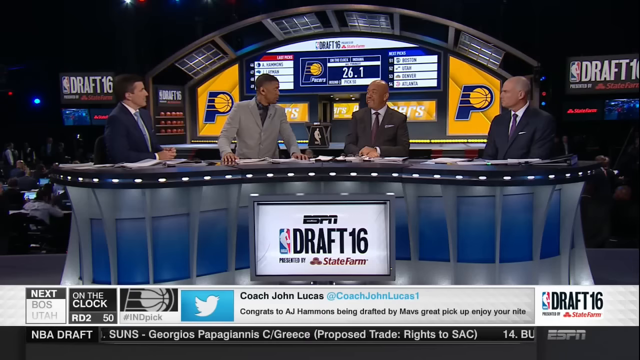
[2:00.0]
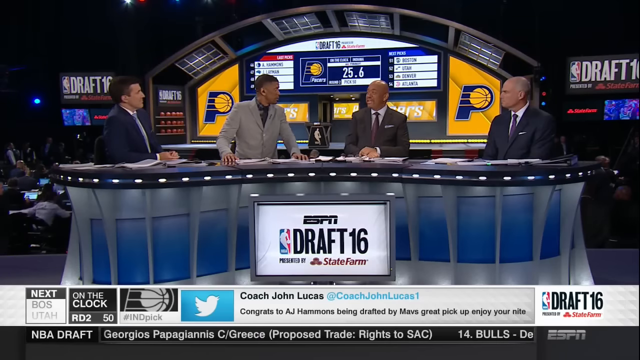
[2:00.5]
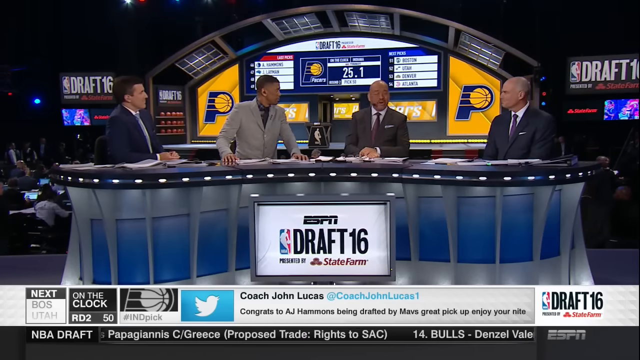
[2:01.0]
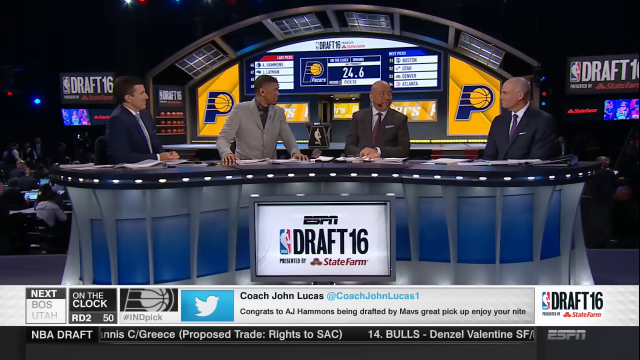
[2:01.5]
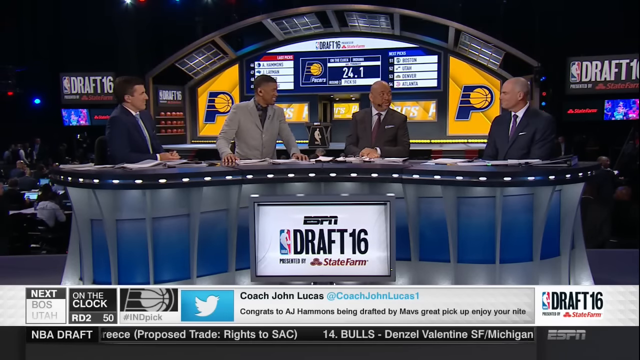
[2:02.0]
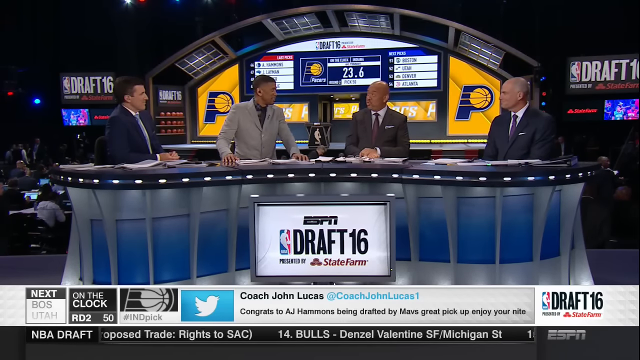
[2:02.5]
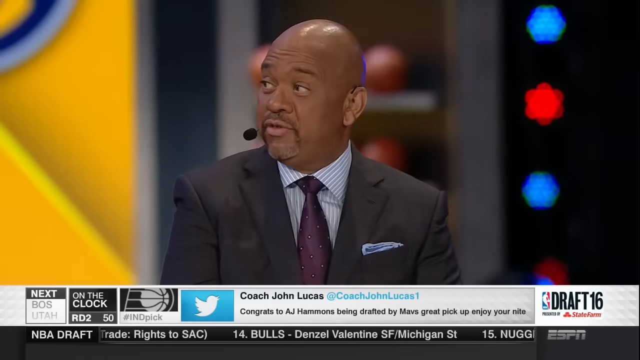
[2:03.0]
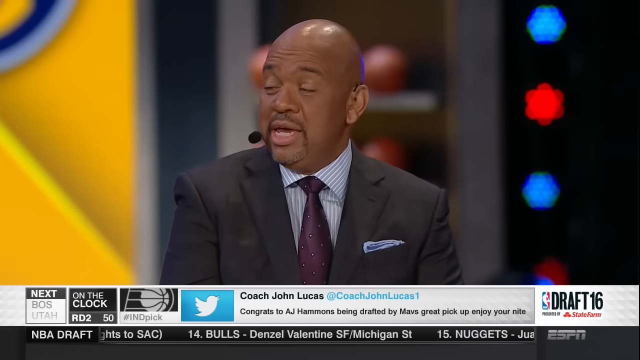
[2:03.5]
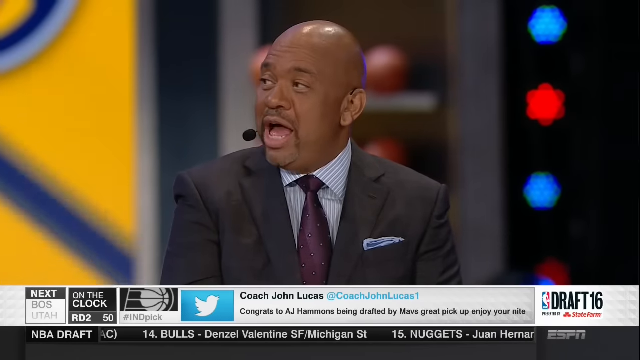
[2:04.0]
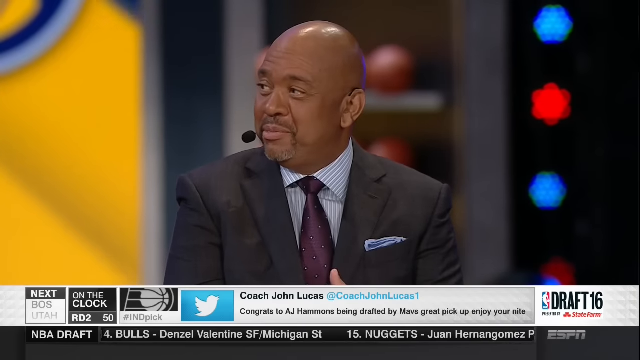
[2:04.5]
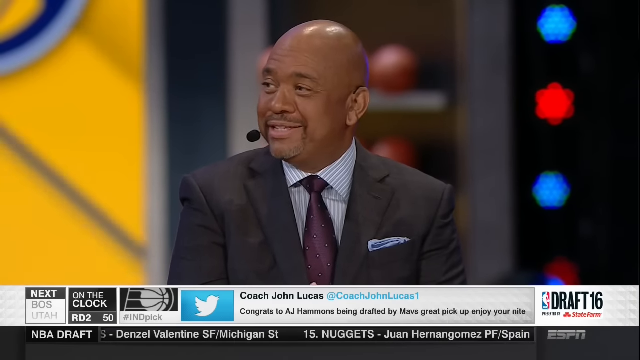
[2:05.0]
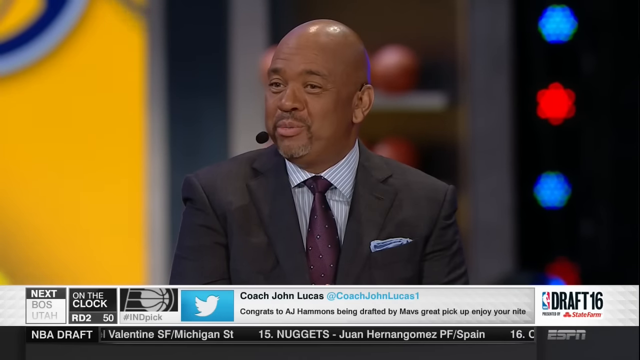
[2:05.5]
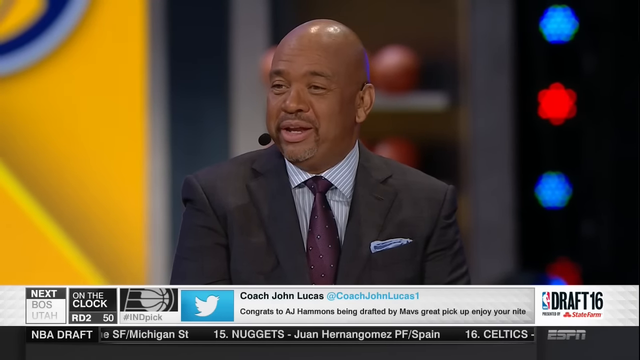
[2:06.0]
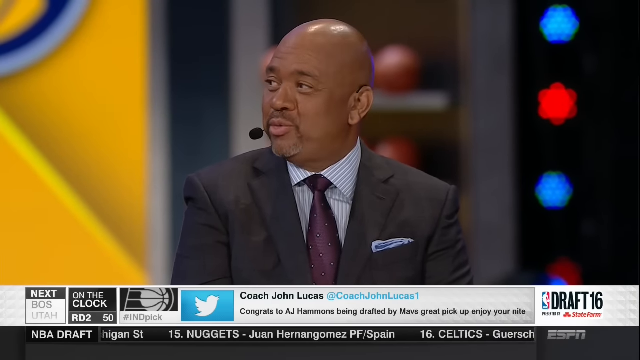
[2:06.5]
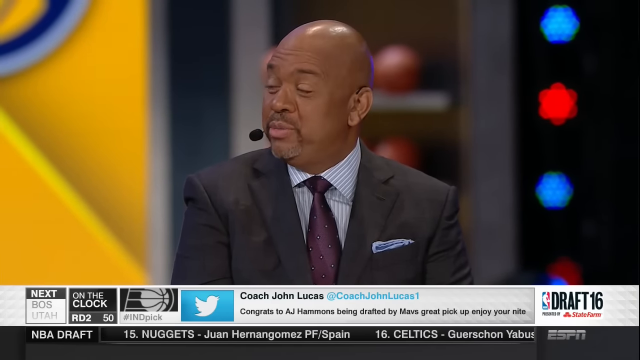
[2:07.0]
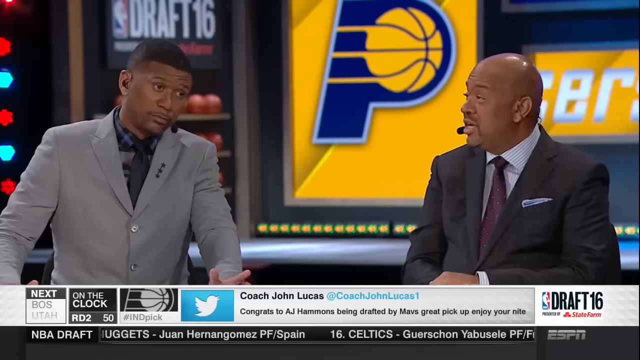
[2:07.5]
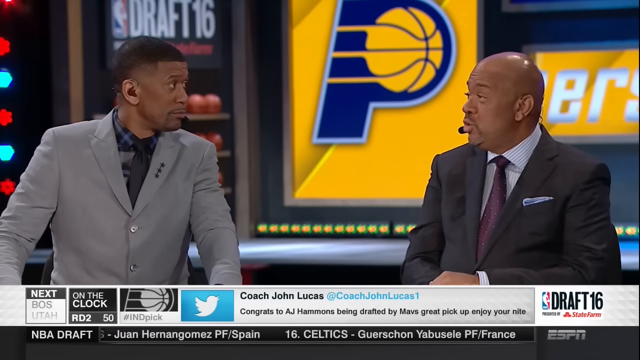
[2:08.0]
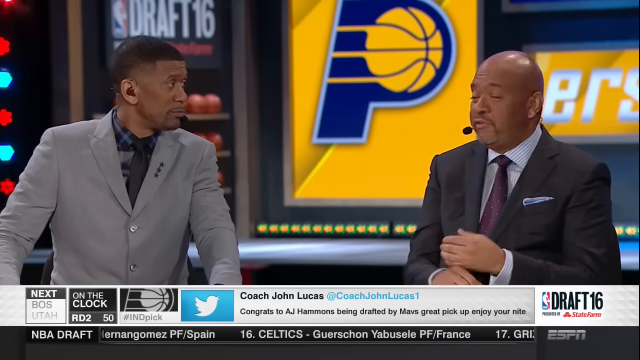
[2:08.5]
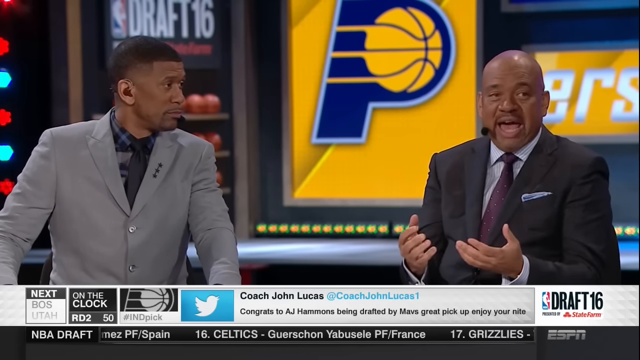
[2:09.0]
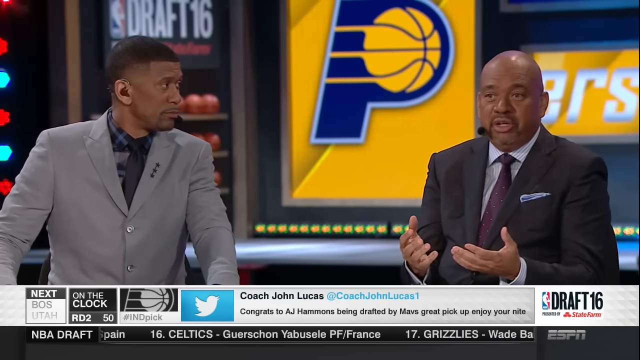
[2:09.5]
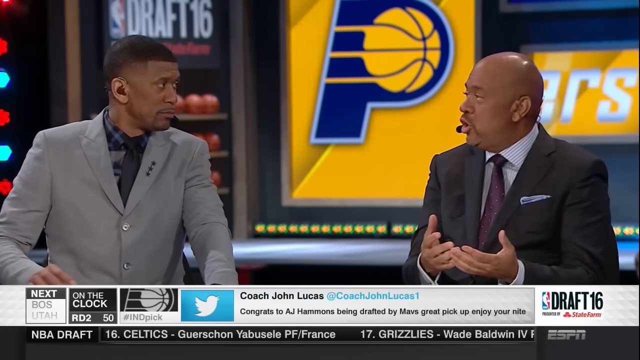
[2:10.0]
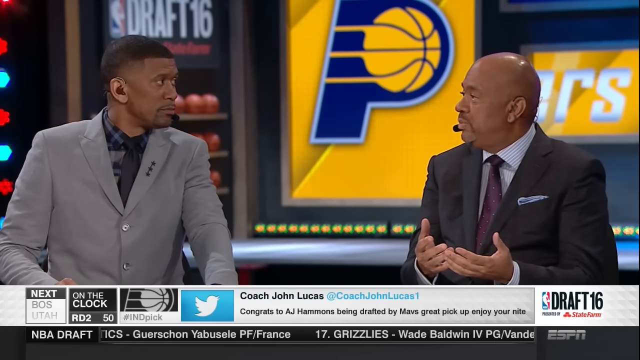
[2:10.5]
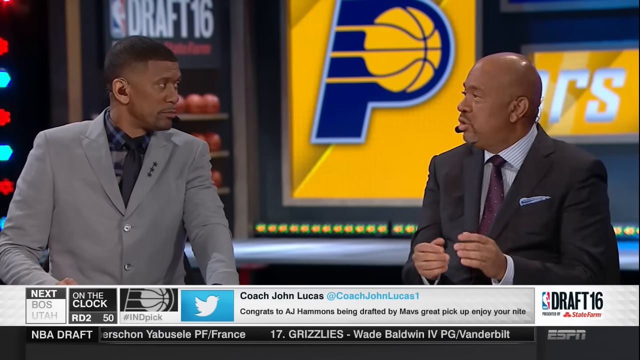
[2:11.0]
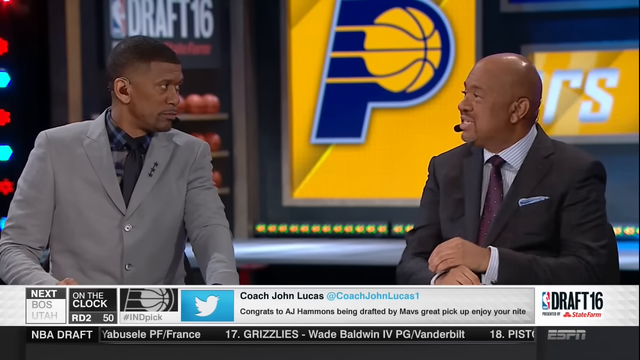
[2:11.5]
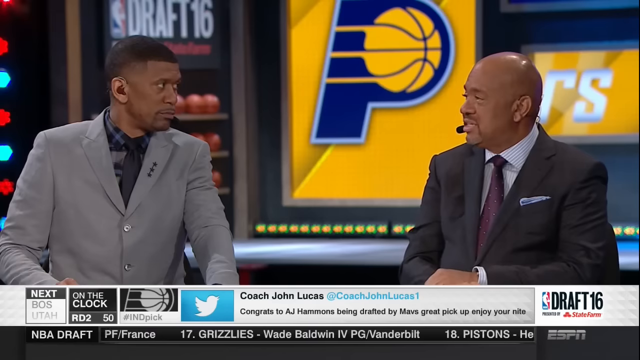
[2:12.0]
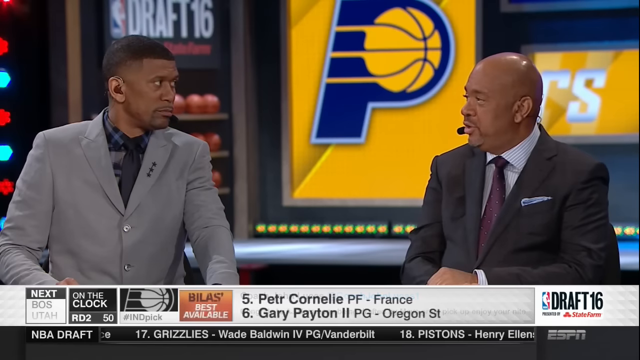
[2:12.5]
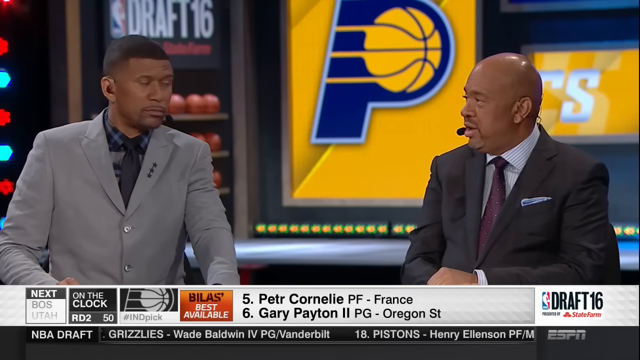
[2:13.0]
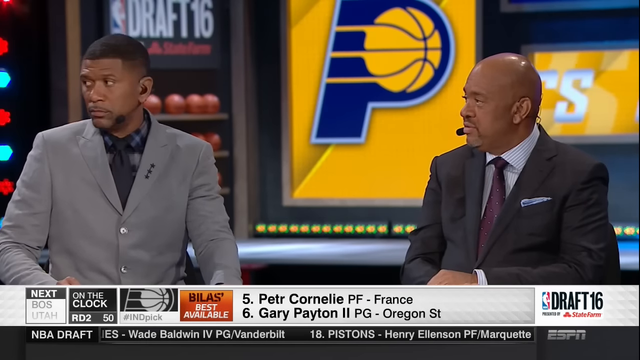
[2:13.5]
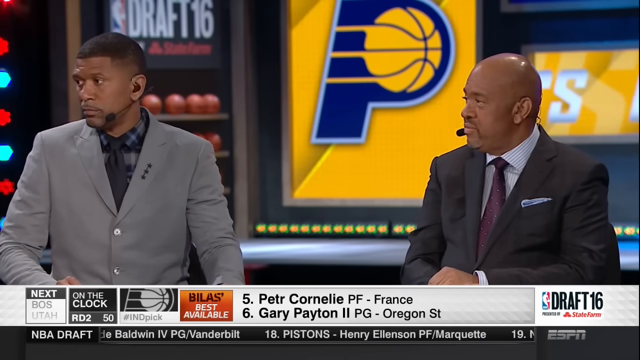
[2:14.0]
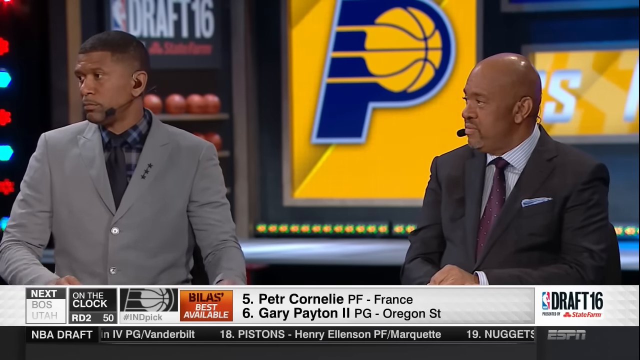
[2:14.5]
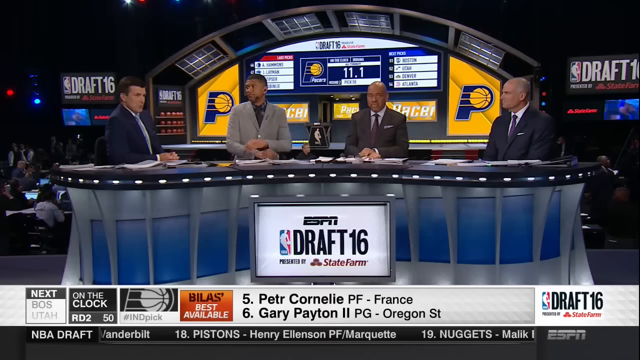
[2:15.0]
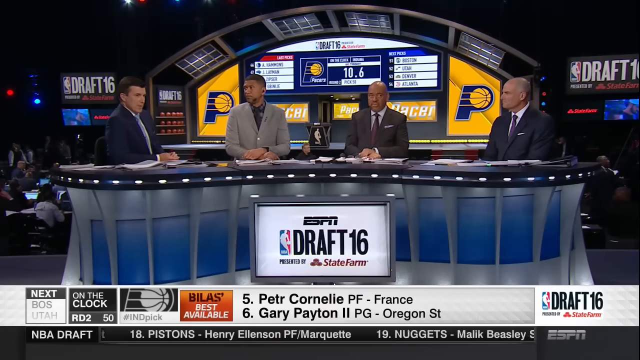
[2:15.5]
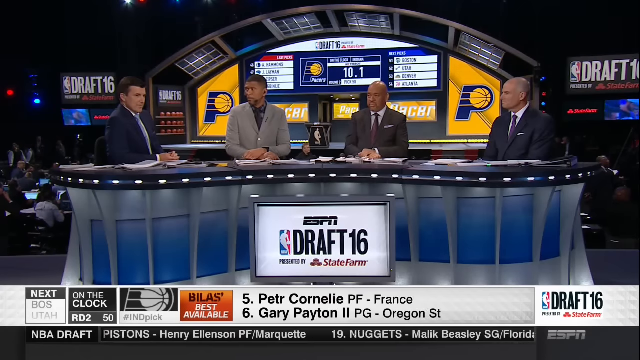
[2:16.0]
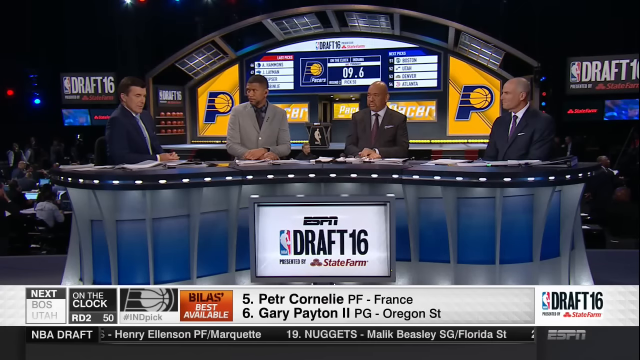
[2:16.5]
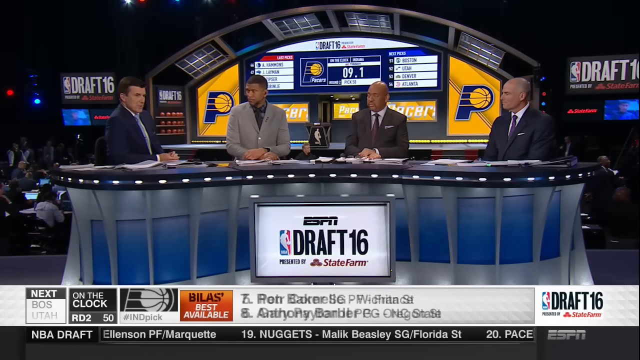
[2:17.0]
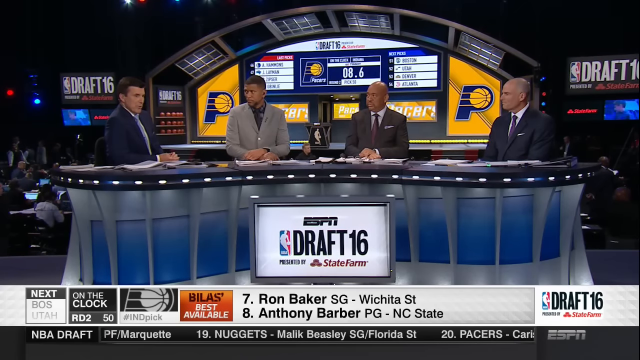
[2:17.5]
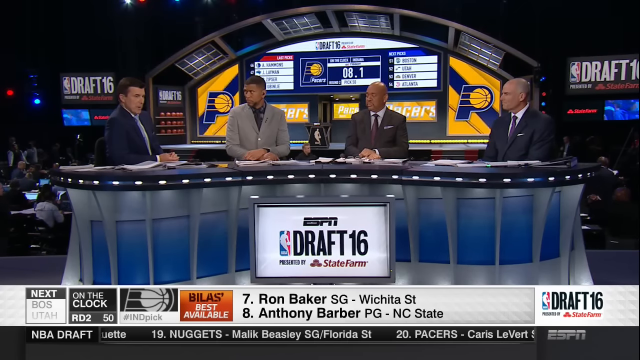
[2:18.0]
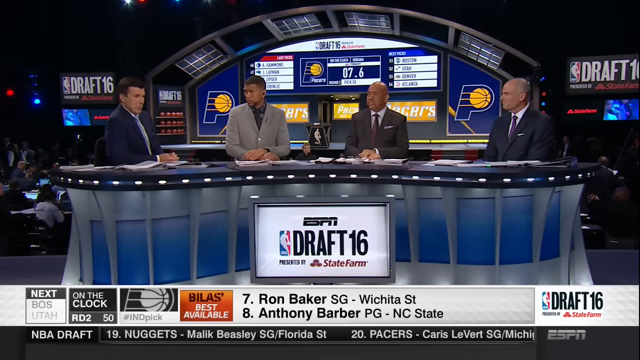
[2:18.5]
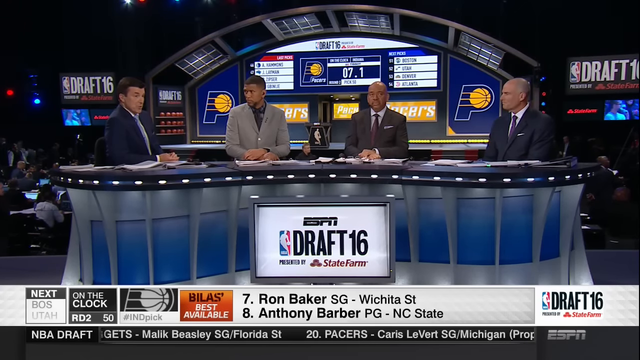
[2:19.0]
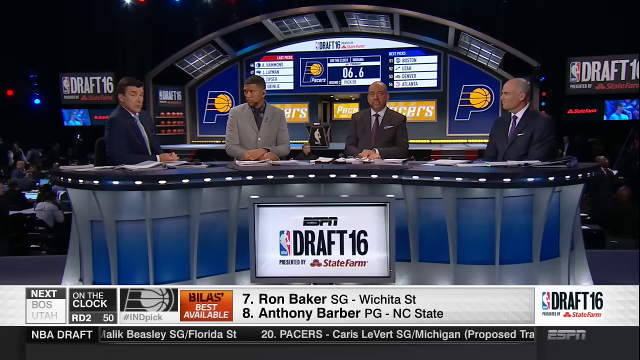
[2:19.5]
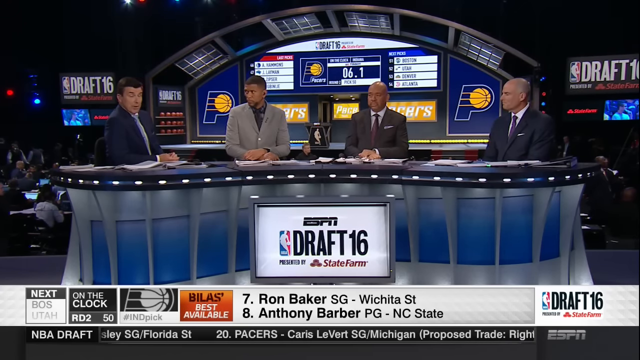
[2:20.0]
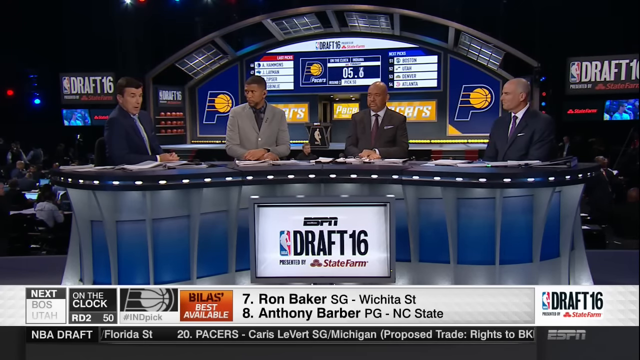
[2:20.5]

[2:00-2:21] All four people sit at the podium, and people in the stands look like they are getting up and leaving. The monitor reads "ESPN" in black at the top, with the NBA logo underneath and "draft 16". Under part of the lettering, black text apparently reads "presented by", and on the other side "State Farm", with what looks like a logo in red between them. A tweet appears, apparently from "Coach John Lucas", handle "@CoachJohnLucas1", reading "congratulations AJ Hemmons being drafted by" the Mavs, followed by "great pick".